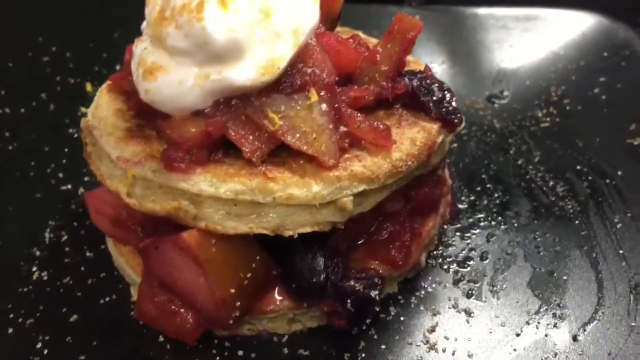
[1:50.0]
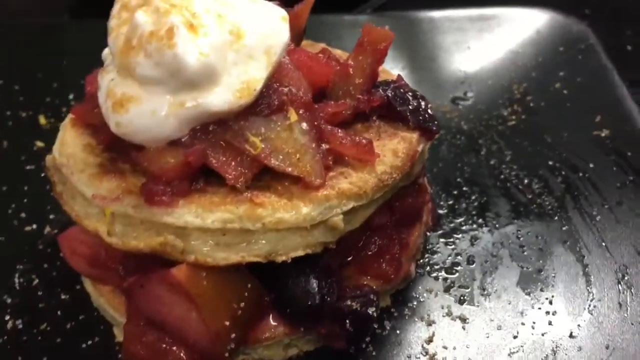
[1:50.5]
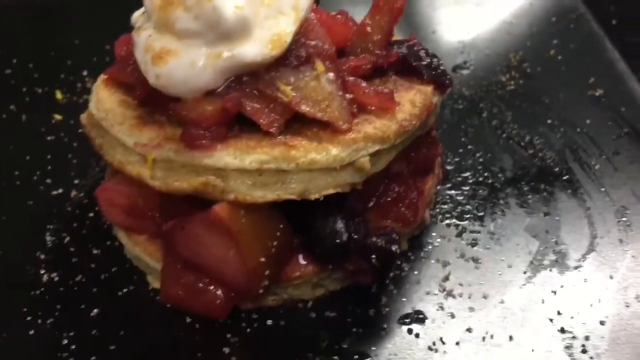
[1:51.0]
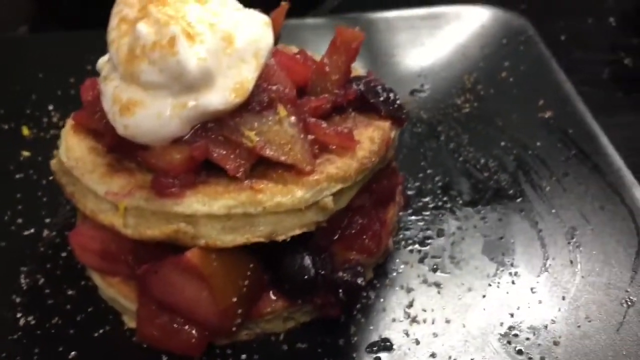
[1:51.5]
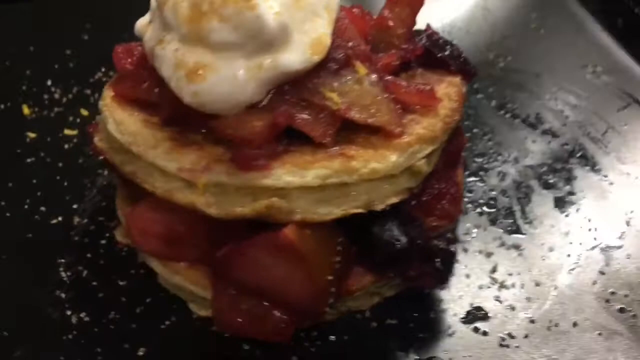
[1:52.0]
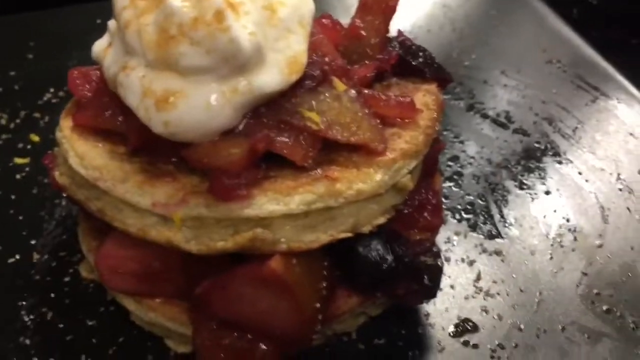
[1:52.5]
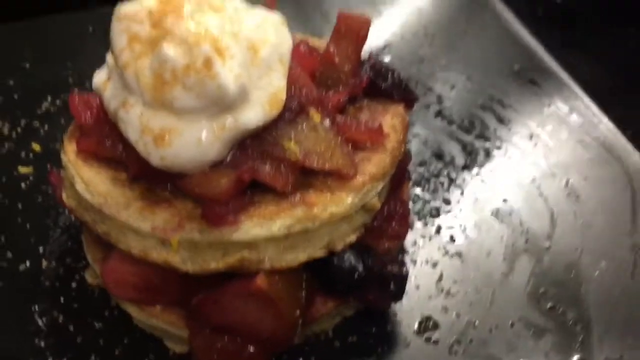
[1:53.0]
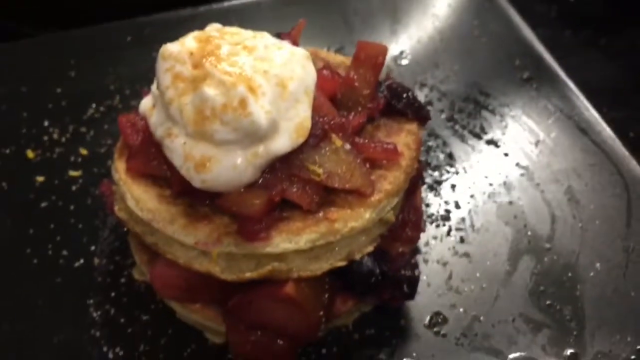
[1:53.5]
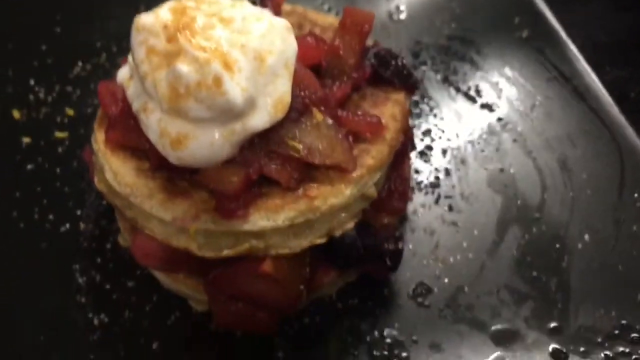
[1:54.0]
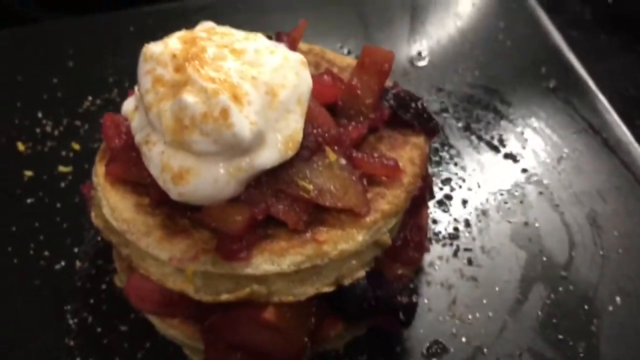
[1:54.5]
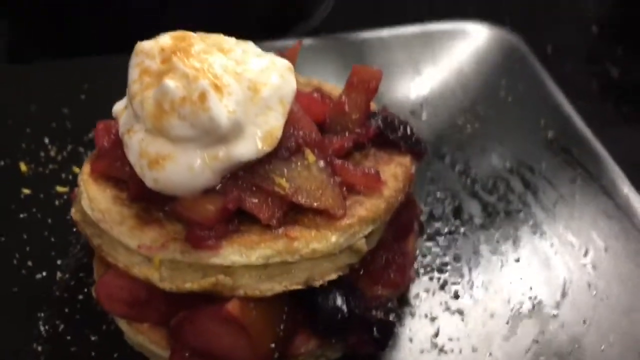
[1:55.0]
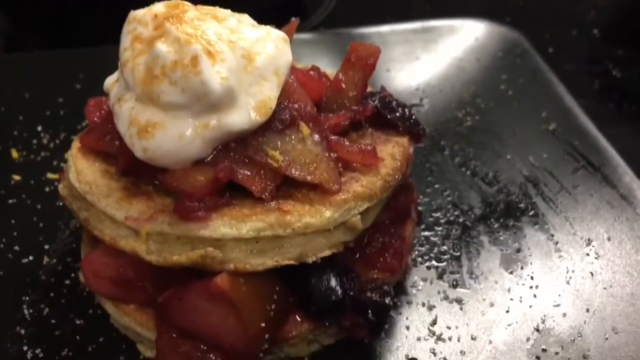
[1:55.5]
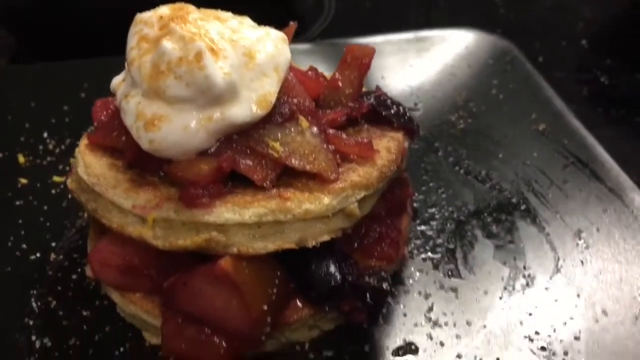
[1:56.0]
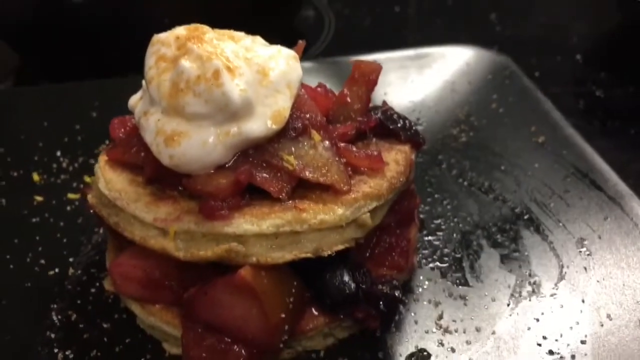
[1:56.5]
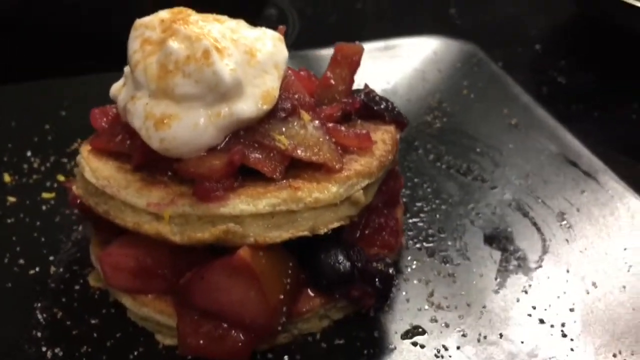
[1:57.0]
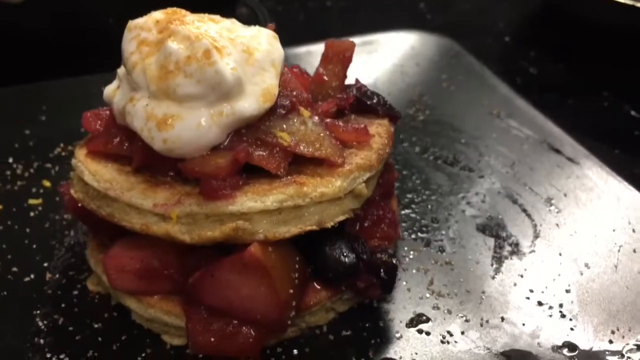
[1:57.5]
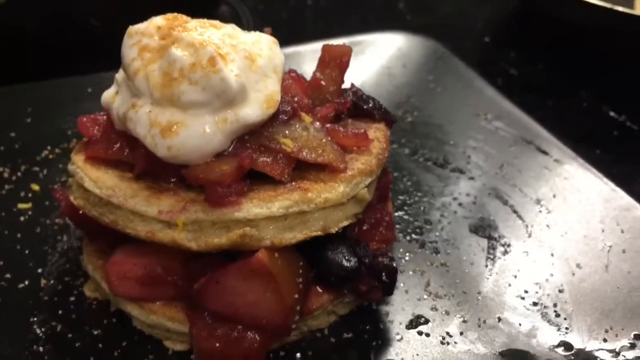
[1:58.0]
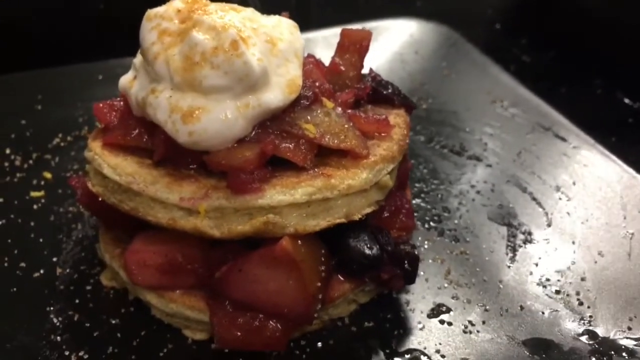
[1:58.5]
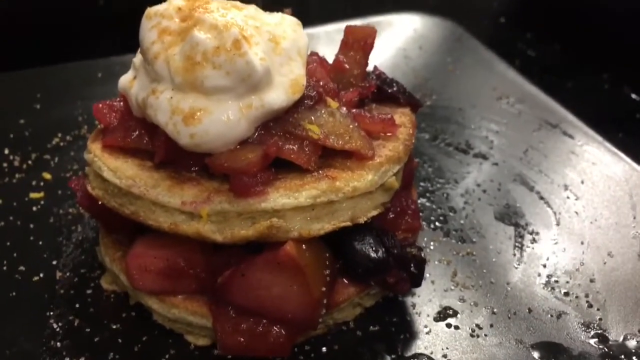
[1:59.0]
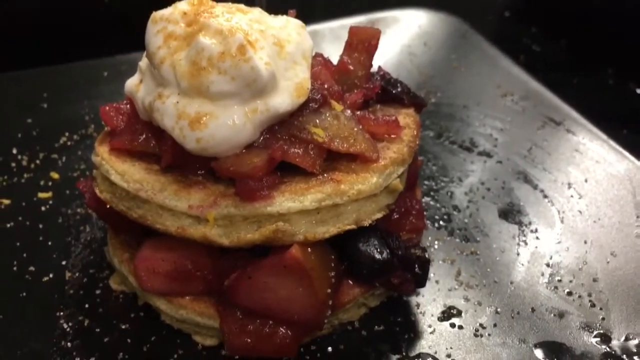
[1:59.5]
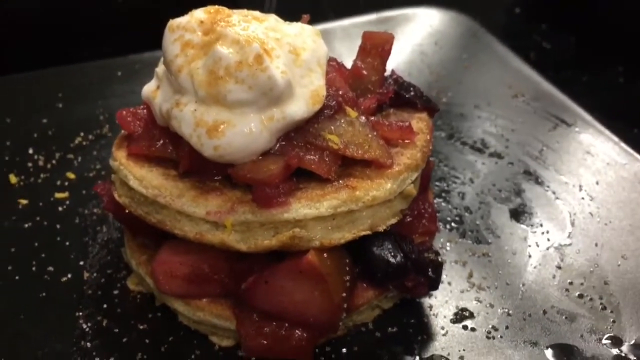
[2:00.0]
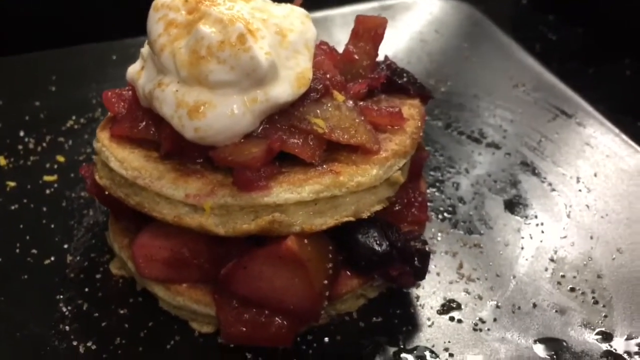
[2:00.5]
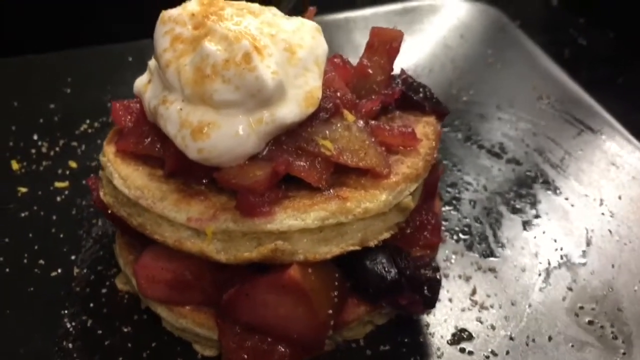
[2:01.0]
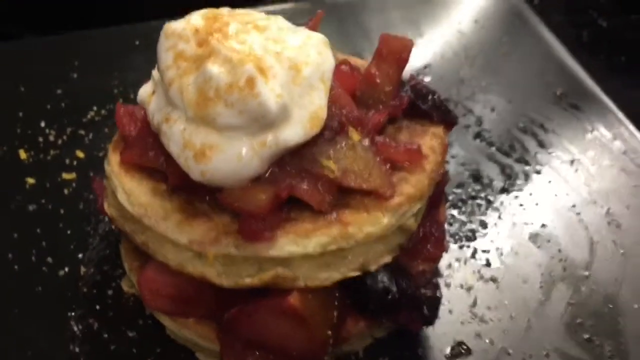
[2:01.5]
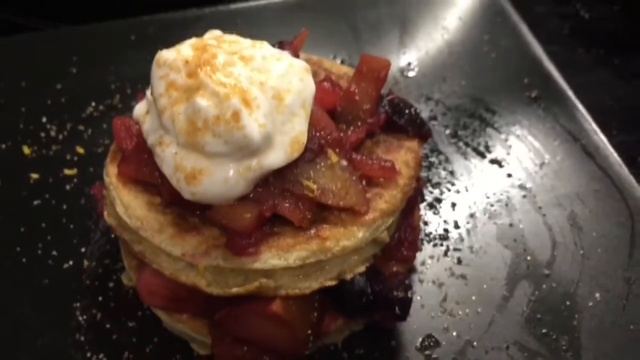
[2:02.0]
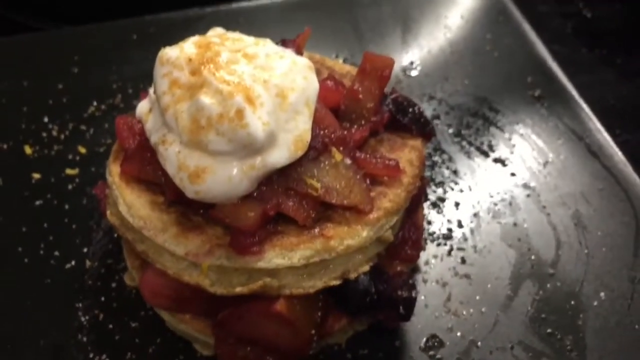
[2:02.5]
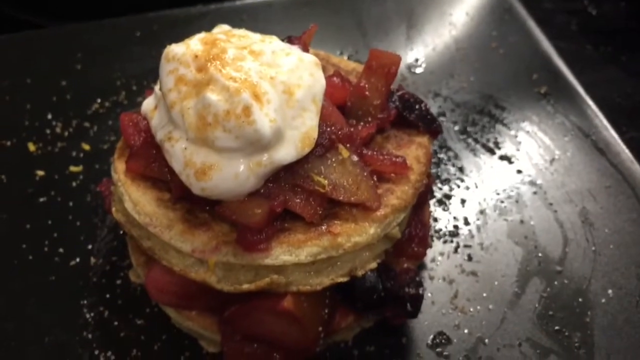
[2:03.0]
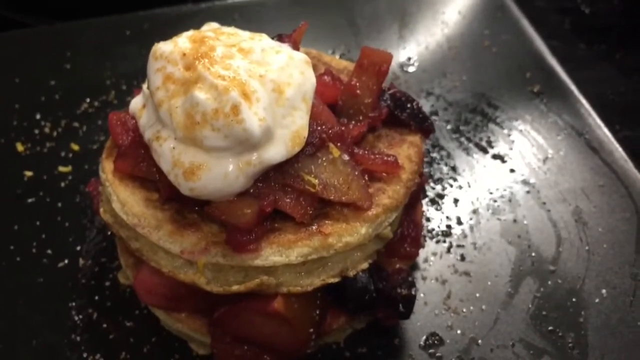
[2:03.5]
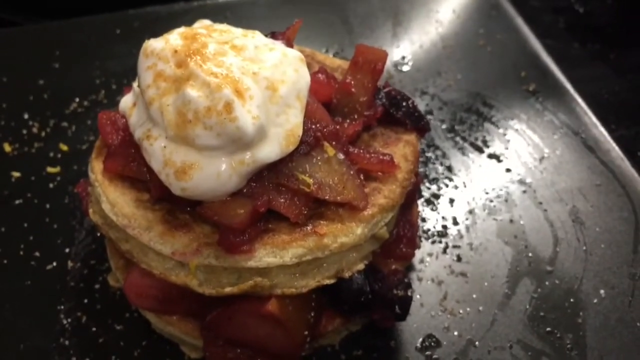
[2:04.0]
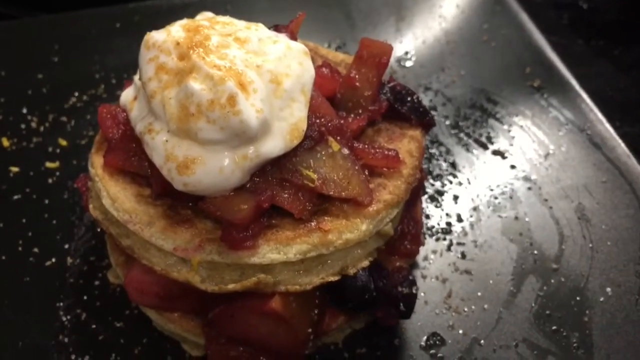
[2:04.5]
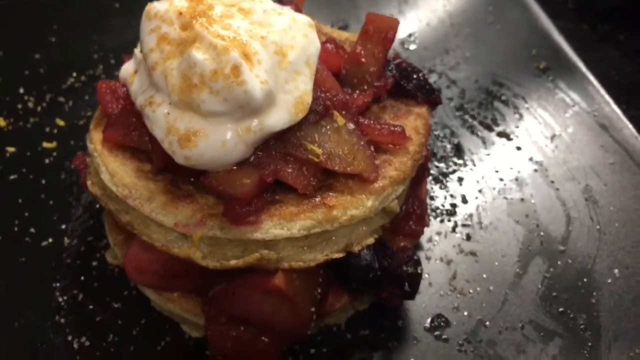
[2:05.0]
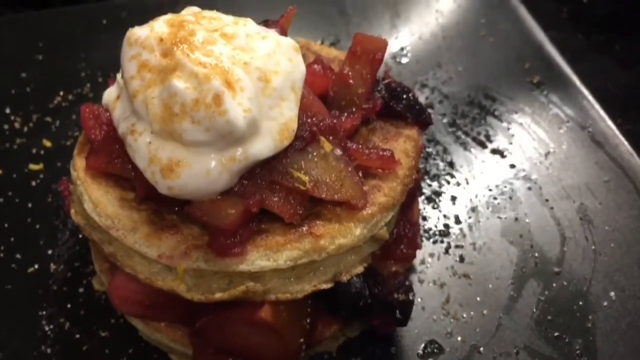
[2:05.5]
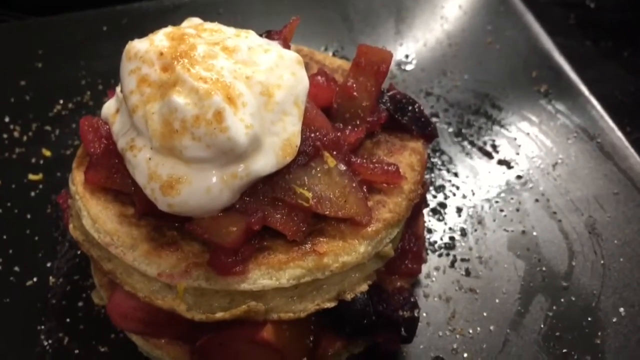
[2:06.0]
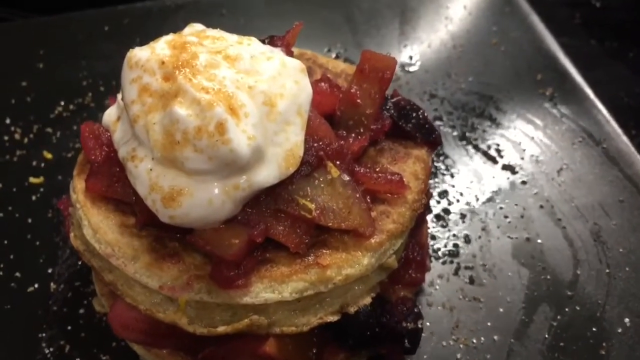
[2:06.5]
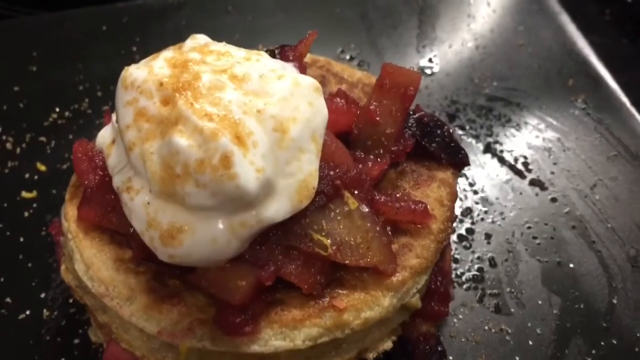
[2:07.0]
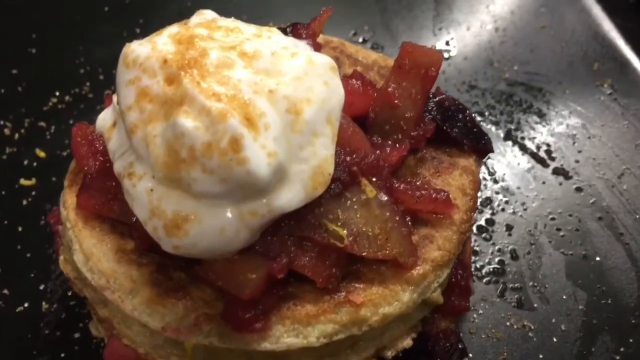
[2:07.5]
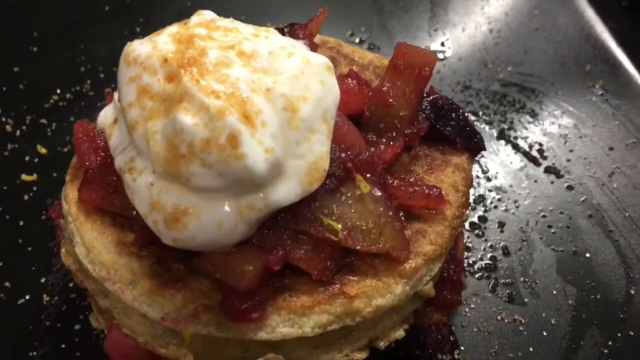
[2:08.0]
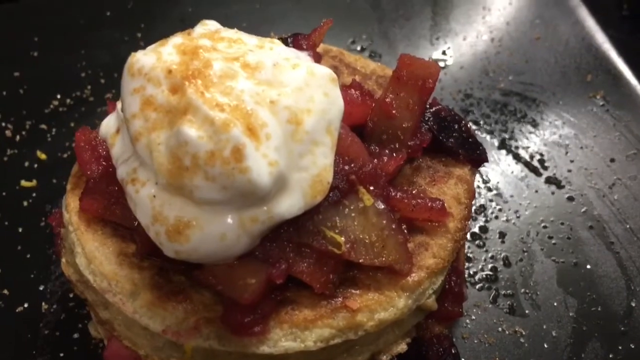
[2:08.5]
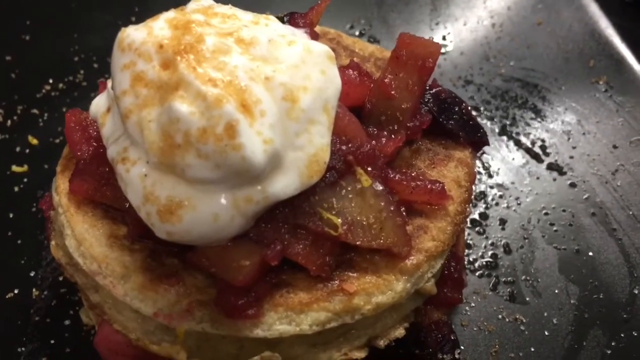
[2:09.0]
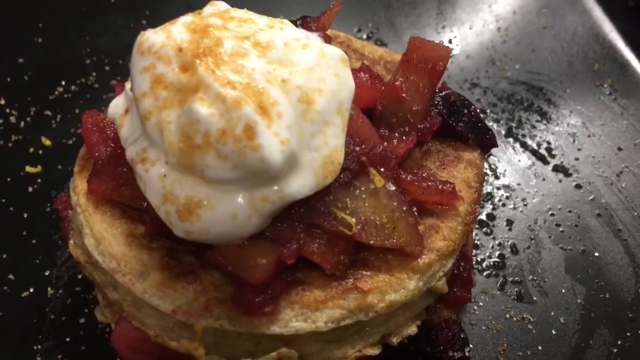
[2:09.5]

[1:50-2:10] The camera is zoomed in on the breakfast dessert: two round pancakes with a caramelized, red-colored fruit compote between the two slices, containing different fruits such as blueberries, strawberries and peaches or other fruit. The fruit mixture is also on top of the top pancake, along with a scoop of what looks like white vanilla ice cream. The camera kind of rotates around the dish and zooms in a bit. Light brown powdery seasonings are sprinkled all over the pancake and on the plate surrounding it. The person appears to be holding up the large plate as they film, zooming in close on the details of the dish.